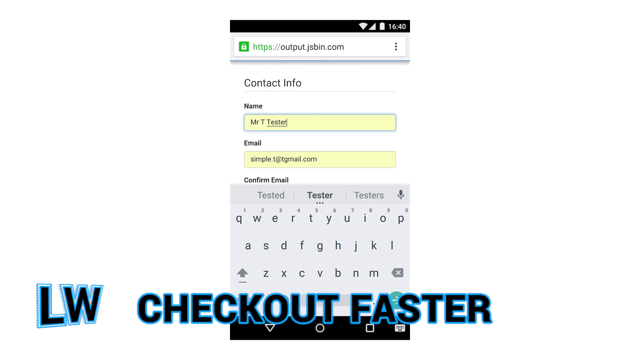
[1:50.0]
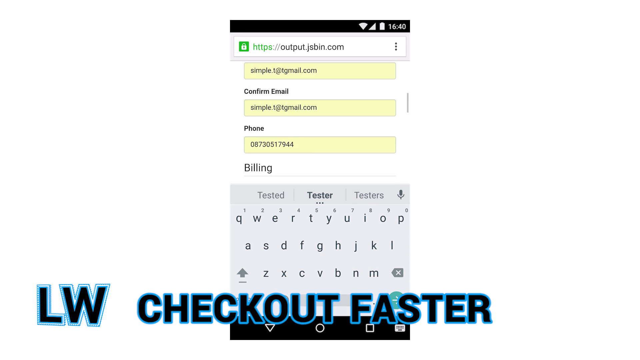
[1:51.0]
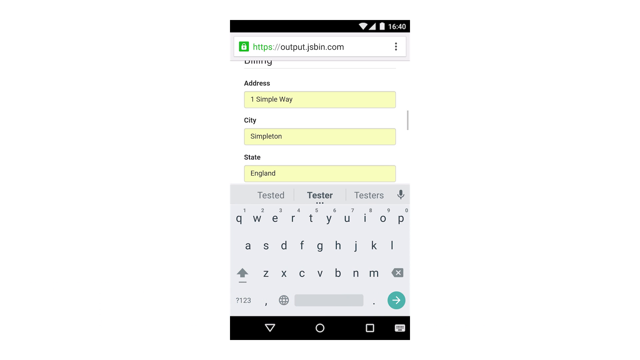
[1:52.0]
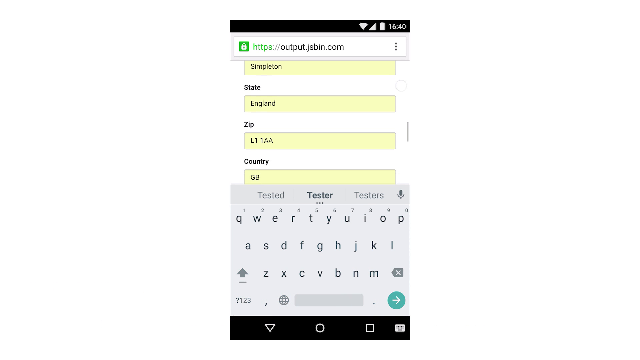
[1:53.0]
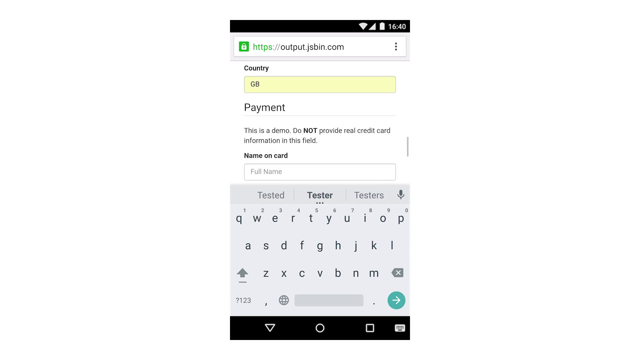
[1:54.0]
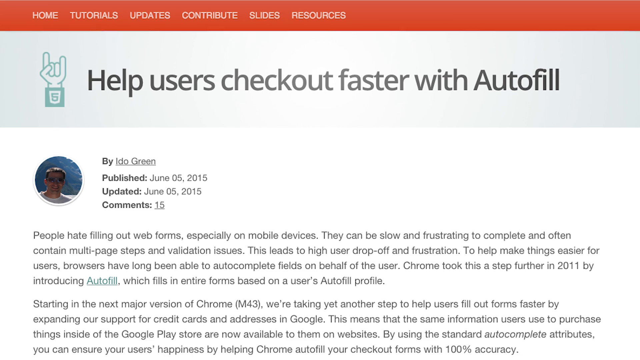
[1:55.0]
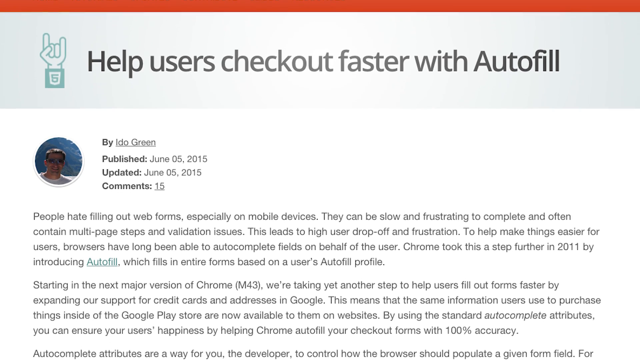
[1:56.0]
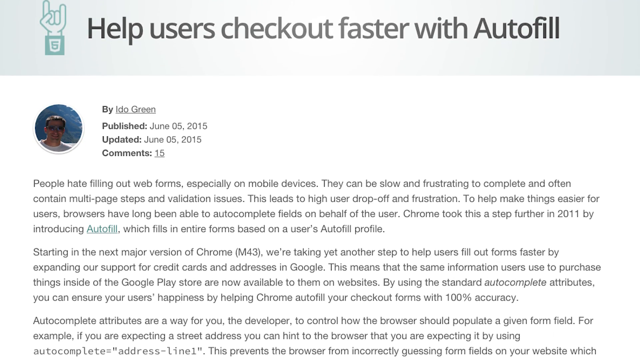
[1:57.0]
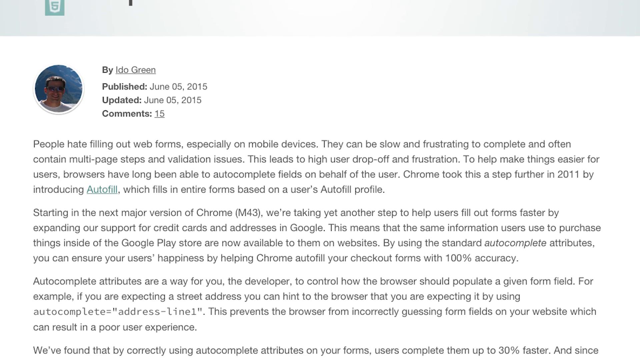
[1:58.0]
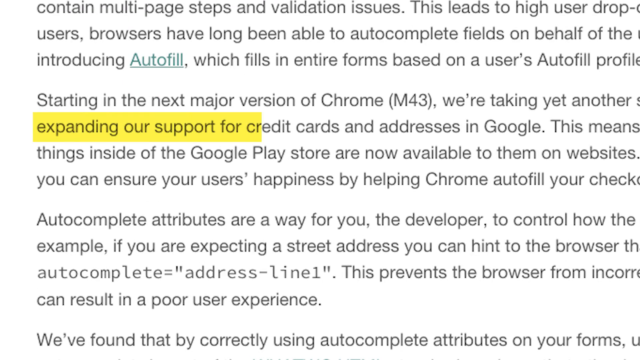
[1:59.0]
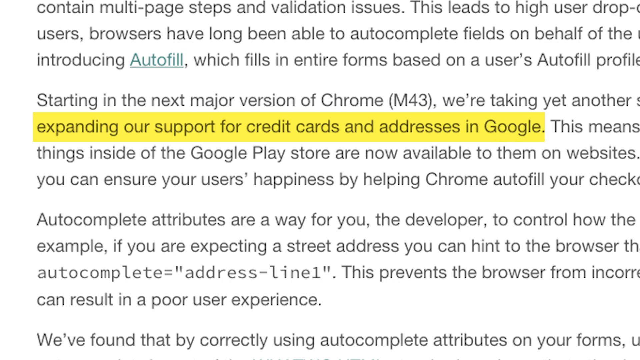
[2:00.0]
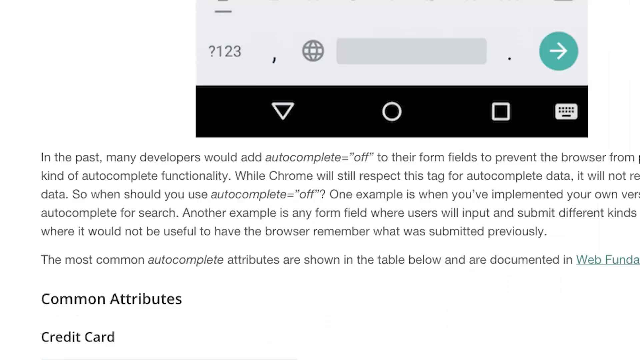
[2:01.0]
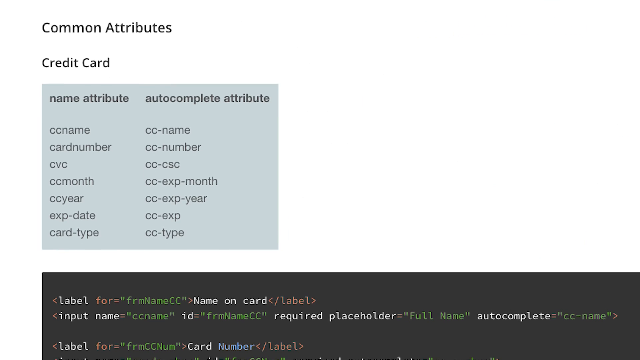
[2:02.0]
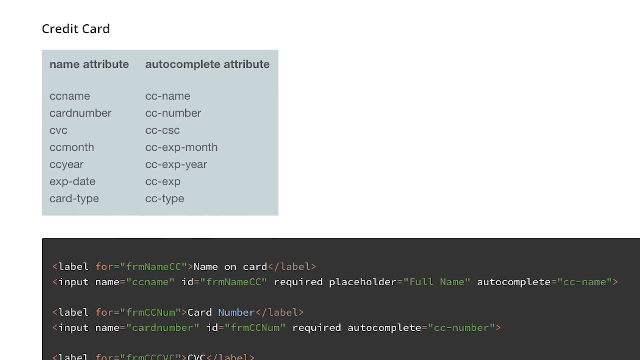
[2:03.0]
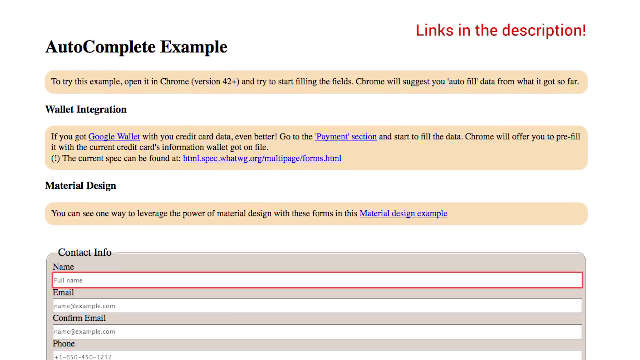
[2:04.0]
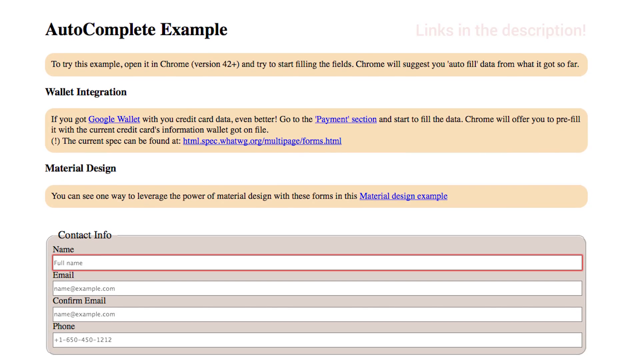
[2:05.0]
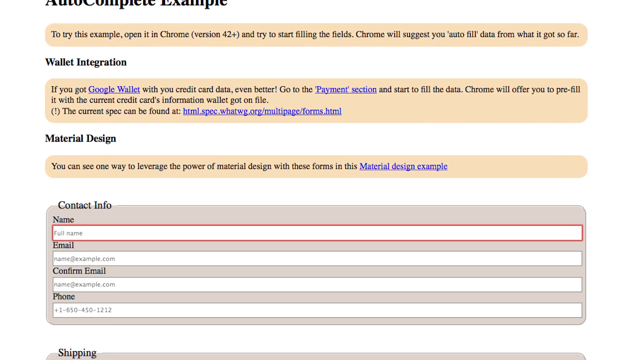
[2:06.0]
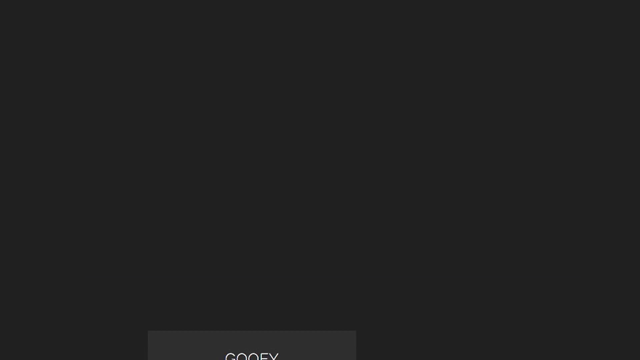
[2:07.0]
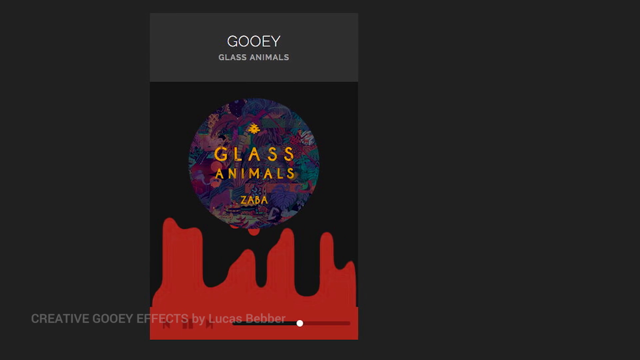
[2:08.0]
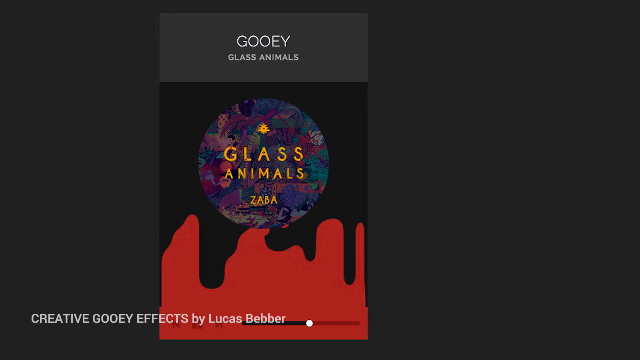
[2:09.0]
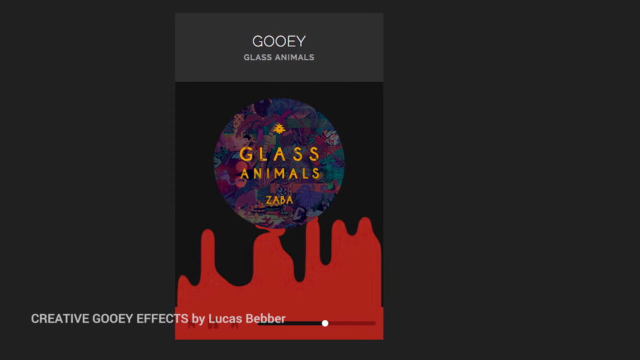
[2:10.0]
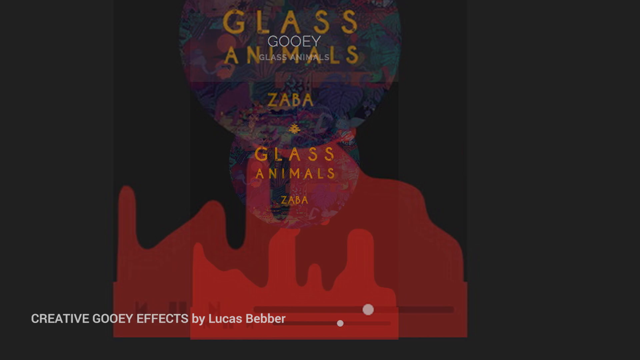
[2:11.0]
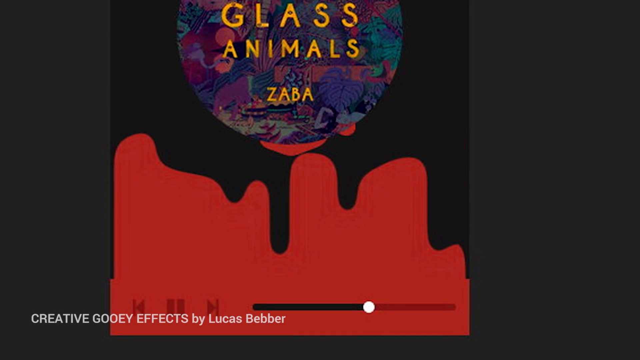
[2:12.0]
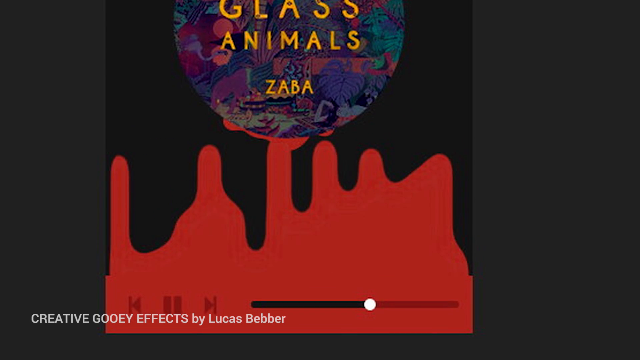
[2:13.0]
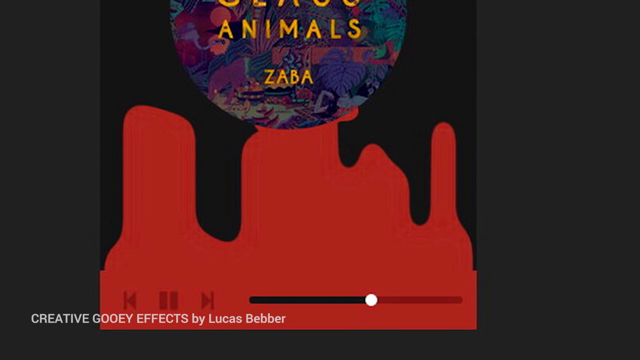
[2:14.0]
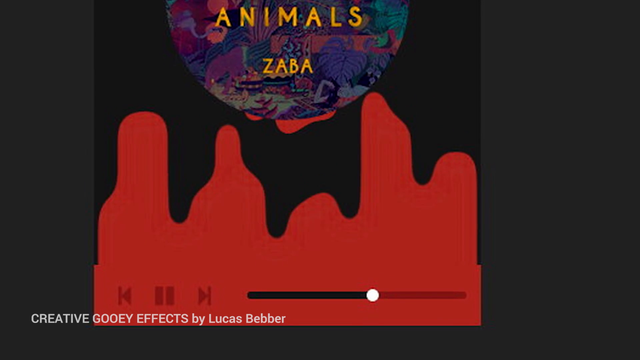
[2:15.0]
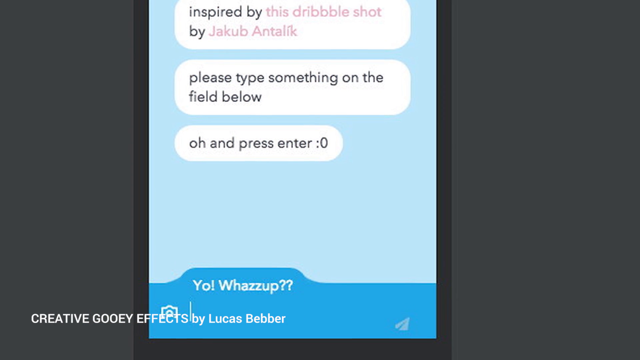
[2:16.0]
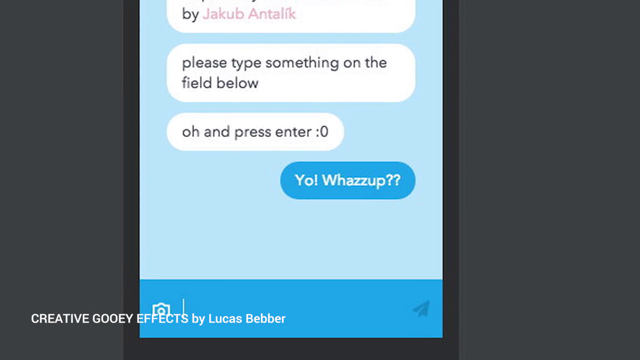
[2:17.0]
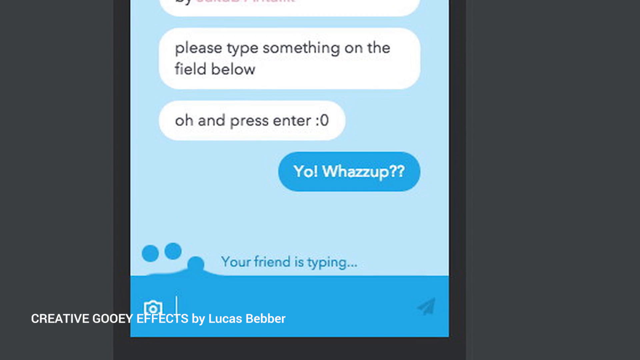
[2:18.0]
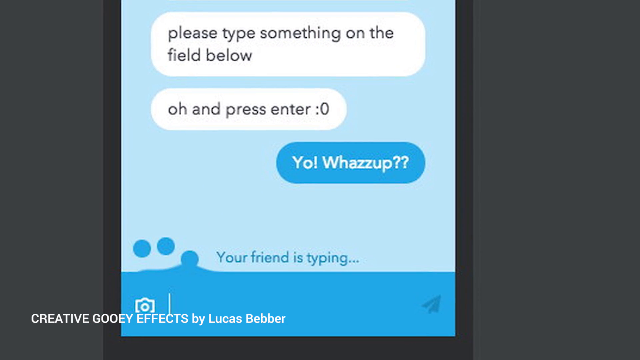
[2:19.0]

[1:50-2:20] The person fills in their information, including their address; at the bottom there is a payment section that is not filled in. A webpage appears saying "help users check out faster with autofill", with the author's name and the publication date, June 5th, 2015. Below is a lot of text, starting with "people hate filling out web forms, especially on mobile devices". The view zooms into an extract and highlights a section that says "expanding our support for credit cards and addresses in Google", then scrolls to the bottom, where bold text says "common attributes" and "credit card"; underneath are a column for name attributes and a column for autocomplete attributes, for example name attribute "CC name" and autocomplete "CC-name". In the top right, "links in the description" flashes on screen in red. An autocomplete example follows, with contact info that is automatically filled. Then a music section for GUI by Glass Animals comes up on the screen, and a red section at the bottom moves.